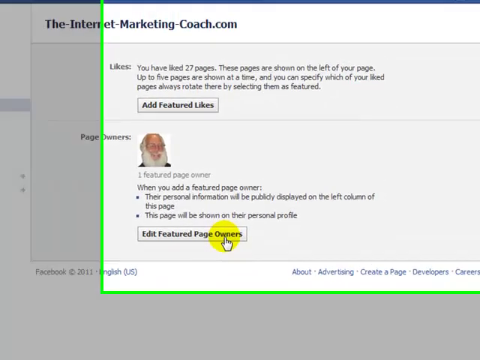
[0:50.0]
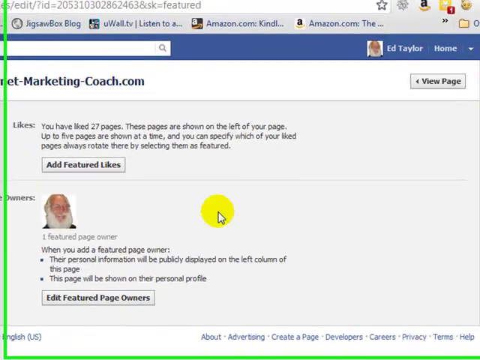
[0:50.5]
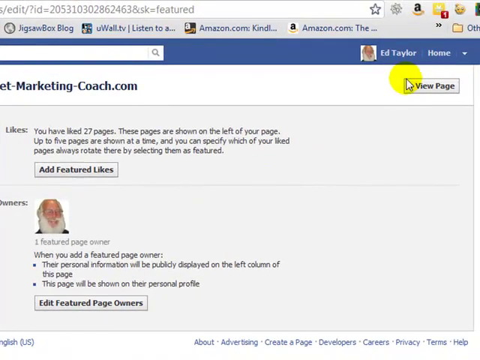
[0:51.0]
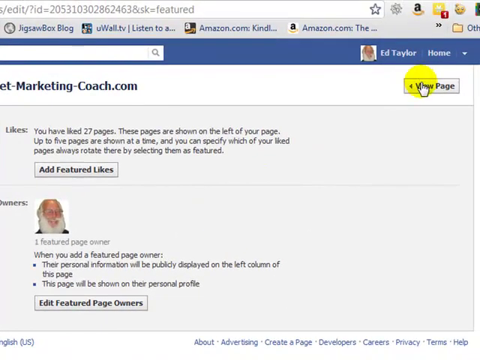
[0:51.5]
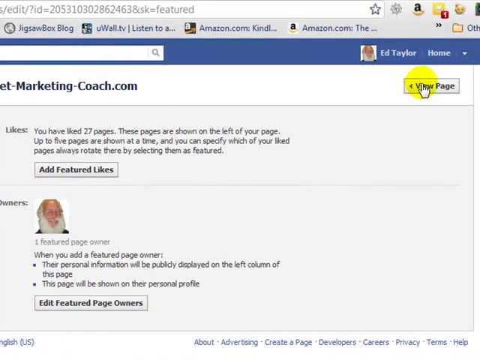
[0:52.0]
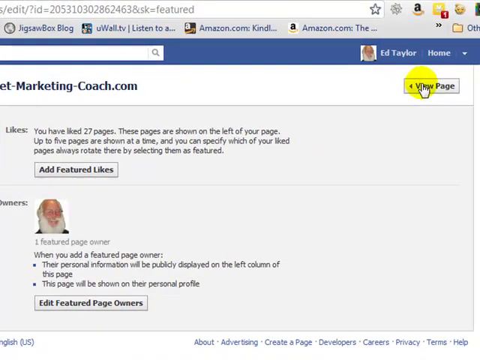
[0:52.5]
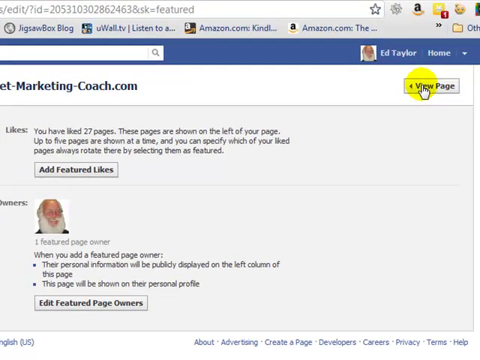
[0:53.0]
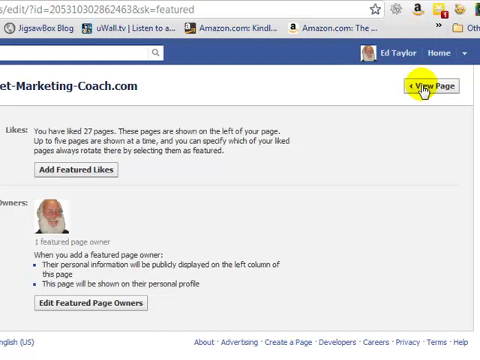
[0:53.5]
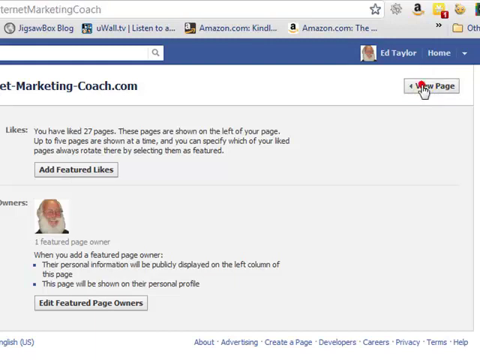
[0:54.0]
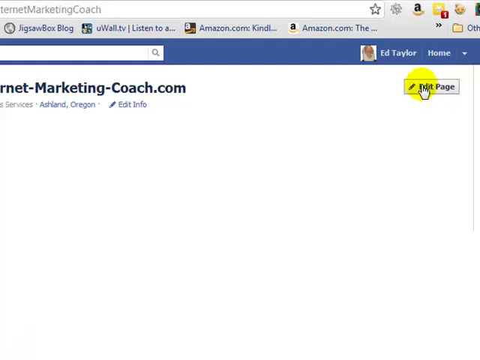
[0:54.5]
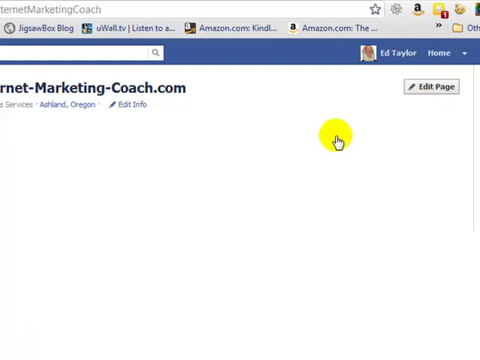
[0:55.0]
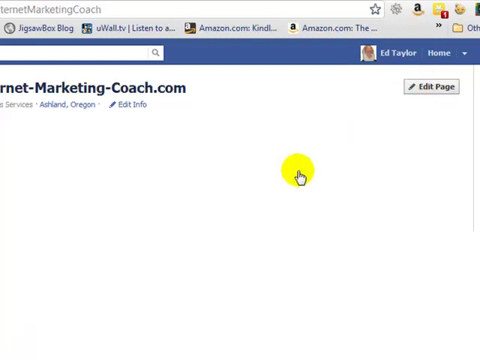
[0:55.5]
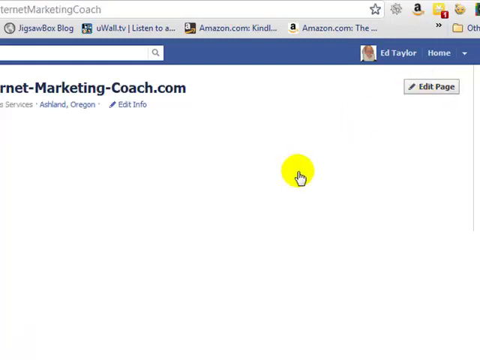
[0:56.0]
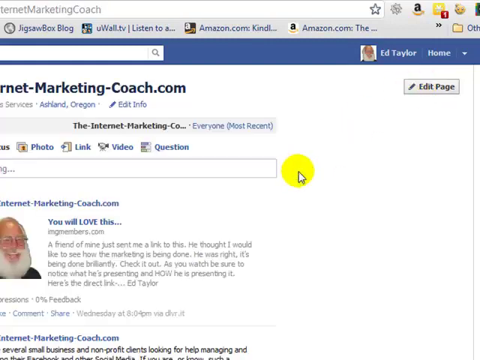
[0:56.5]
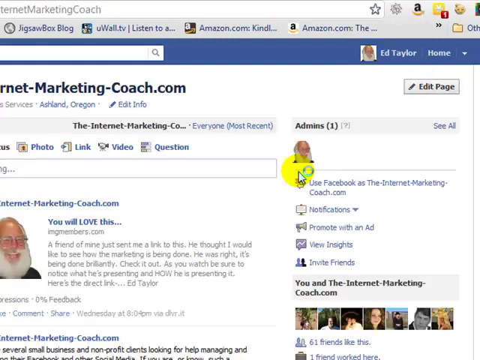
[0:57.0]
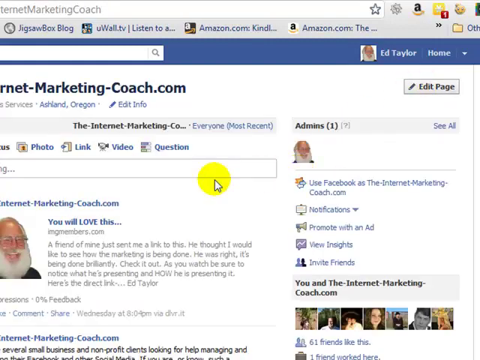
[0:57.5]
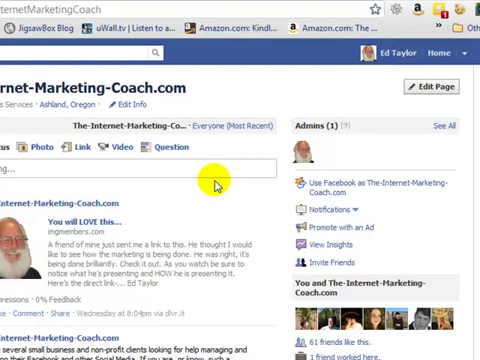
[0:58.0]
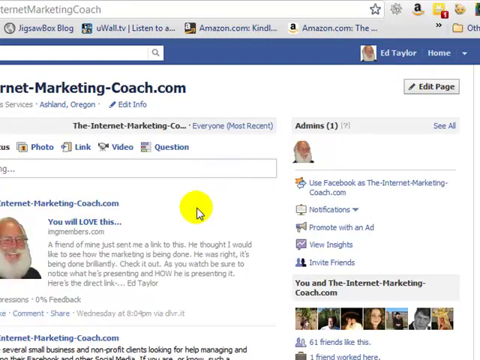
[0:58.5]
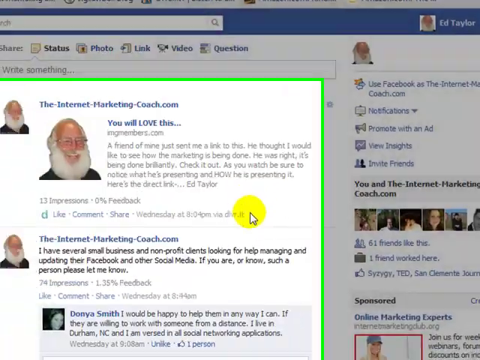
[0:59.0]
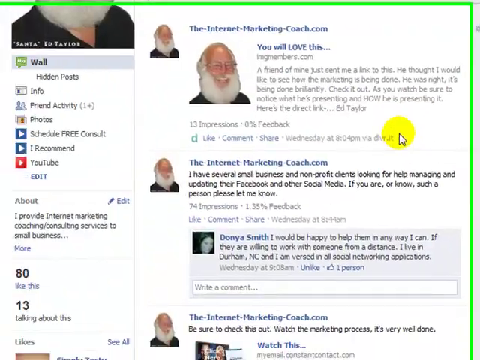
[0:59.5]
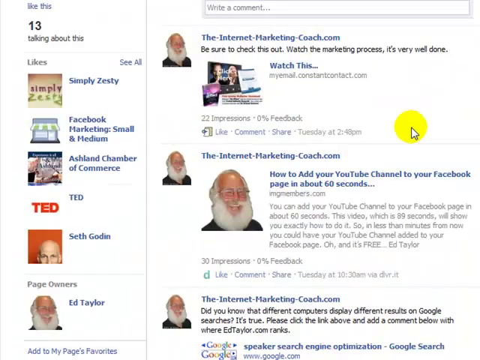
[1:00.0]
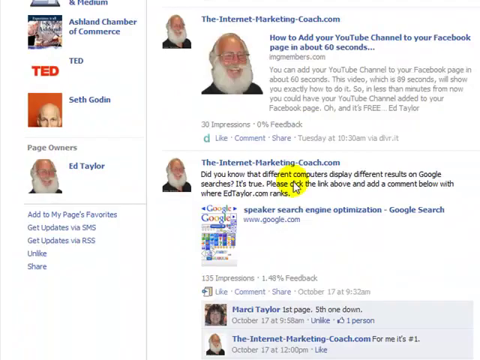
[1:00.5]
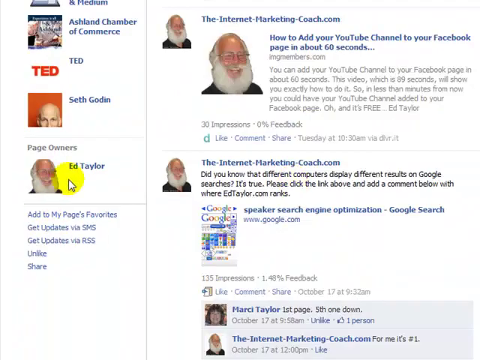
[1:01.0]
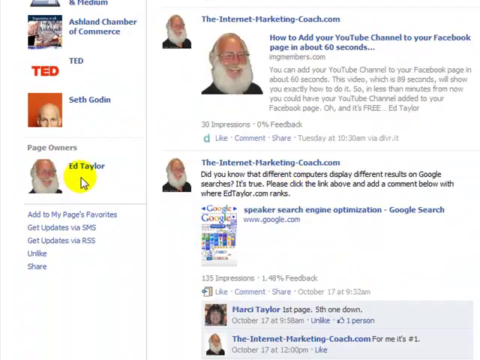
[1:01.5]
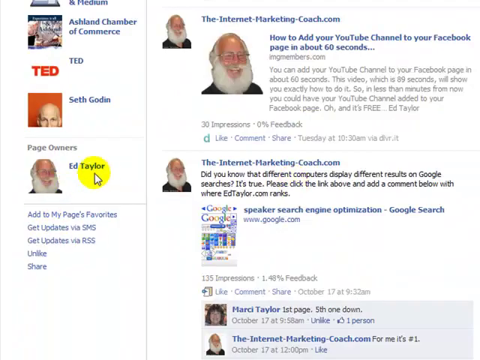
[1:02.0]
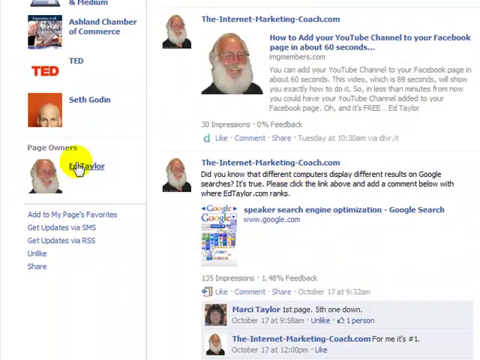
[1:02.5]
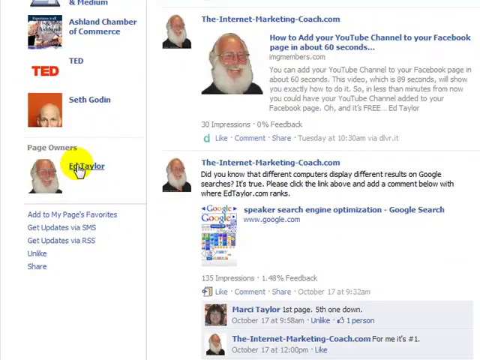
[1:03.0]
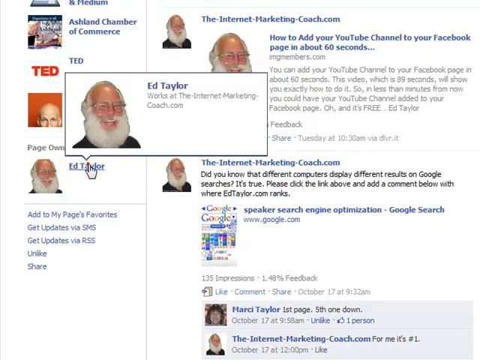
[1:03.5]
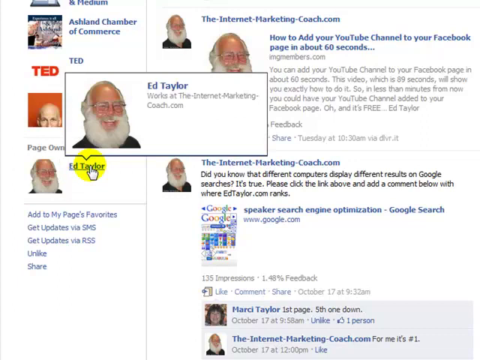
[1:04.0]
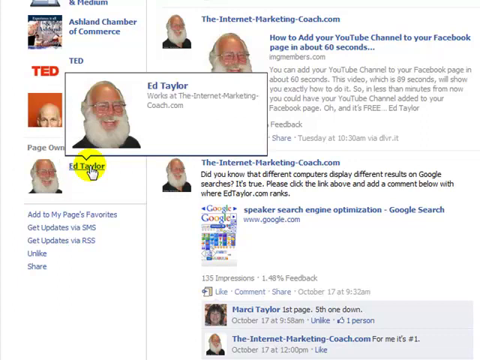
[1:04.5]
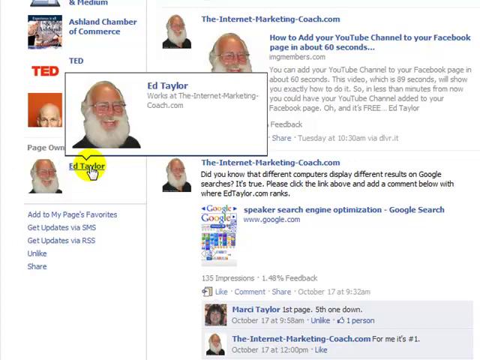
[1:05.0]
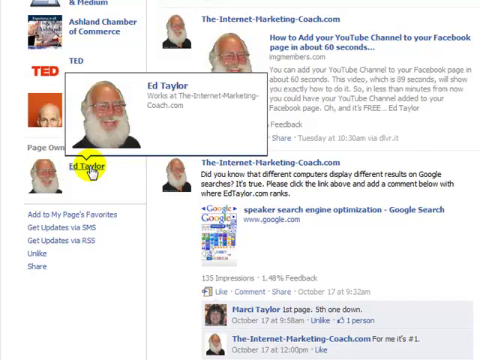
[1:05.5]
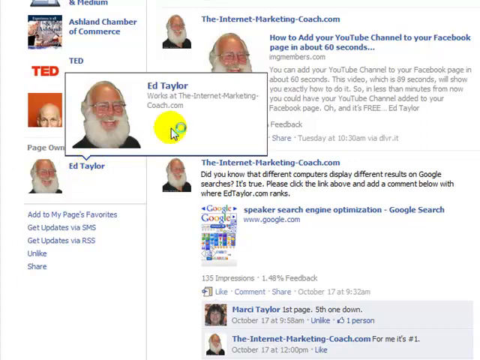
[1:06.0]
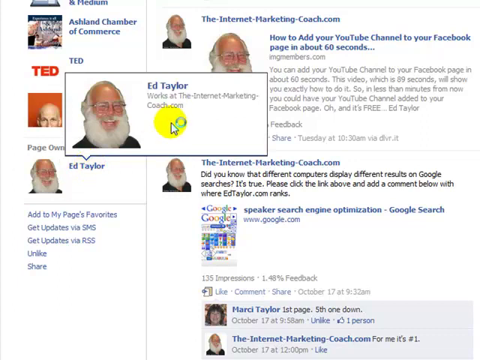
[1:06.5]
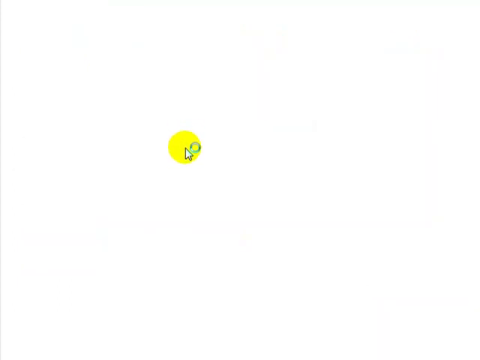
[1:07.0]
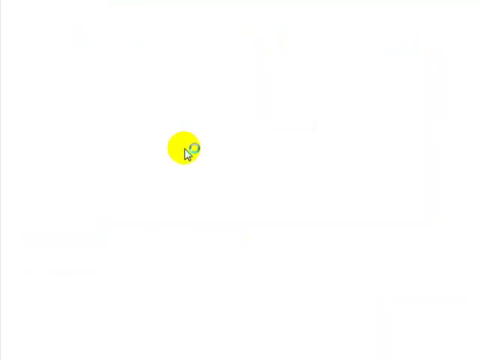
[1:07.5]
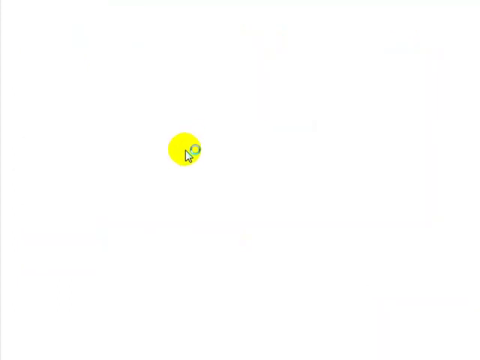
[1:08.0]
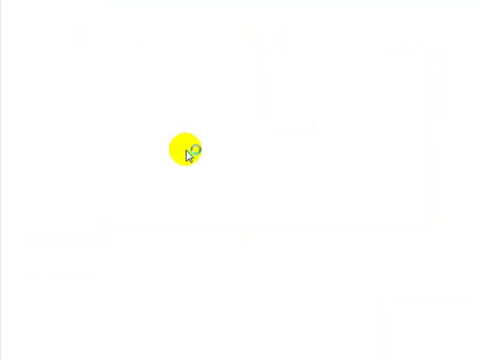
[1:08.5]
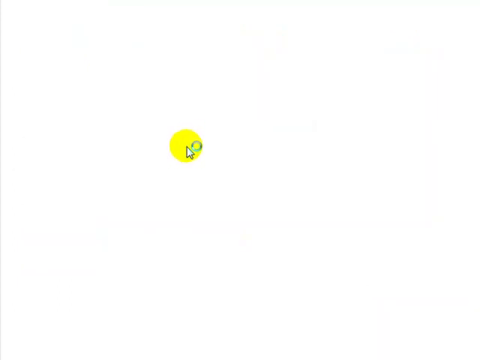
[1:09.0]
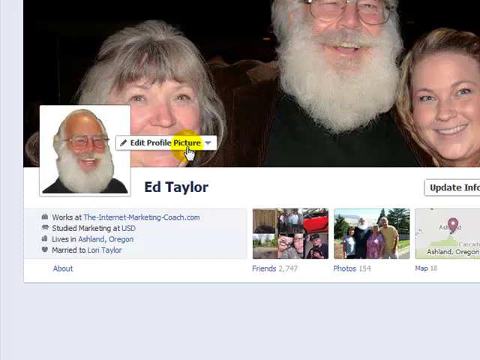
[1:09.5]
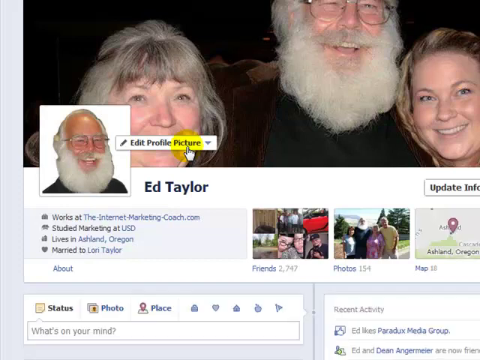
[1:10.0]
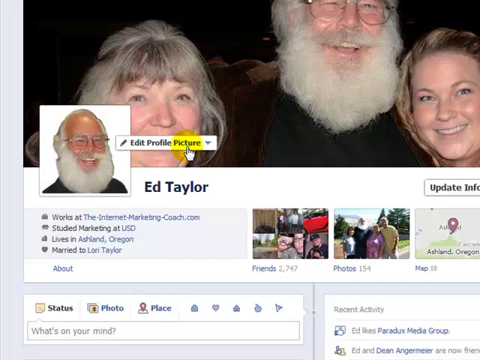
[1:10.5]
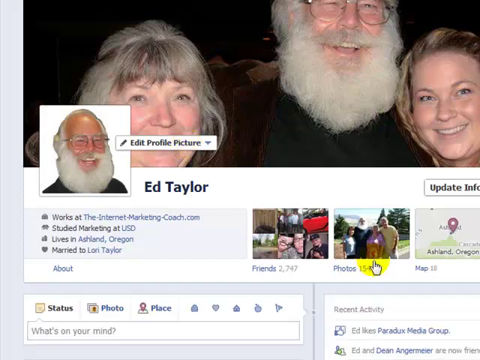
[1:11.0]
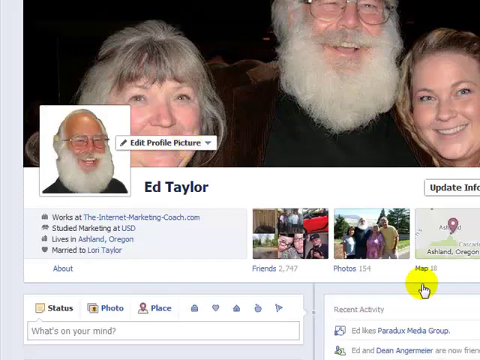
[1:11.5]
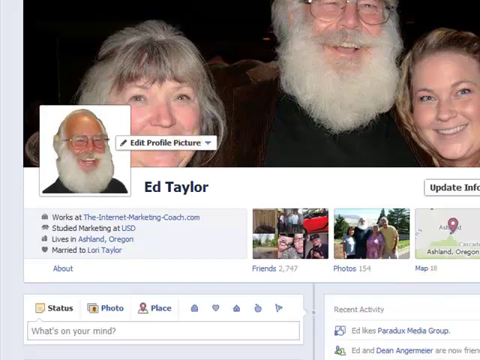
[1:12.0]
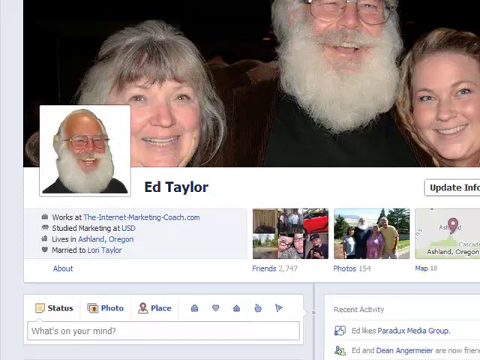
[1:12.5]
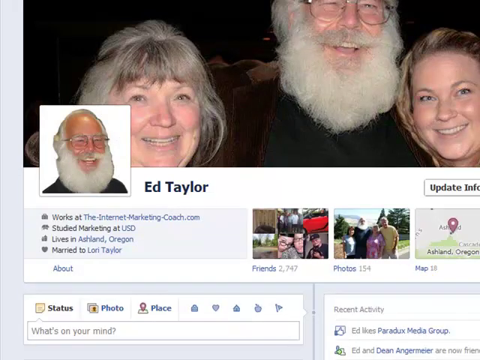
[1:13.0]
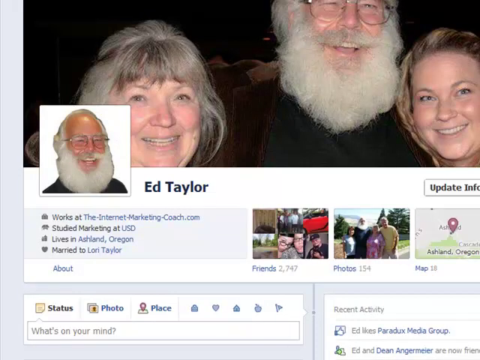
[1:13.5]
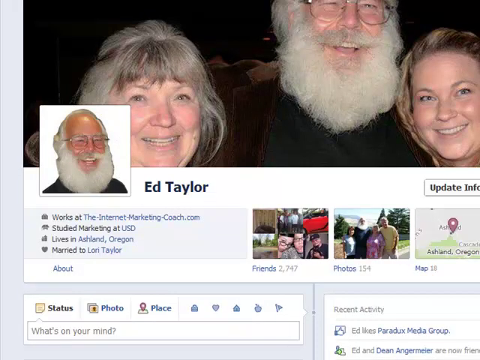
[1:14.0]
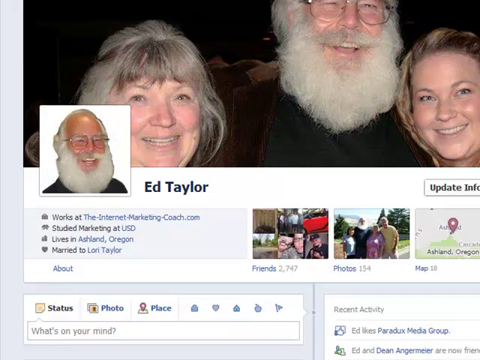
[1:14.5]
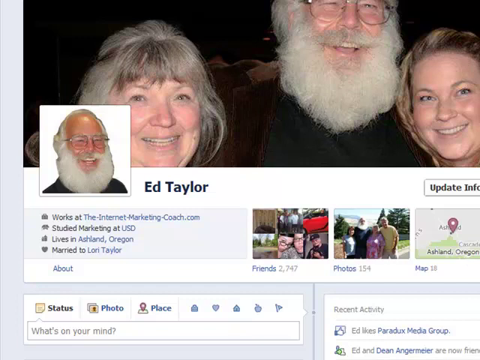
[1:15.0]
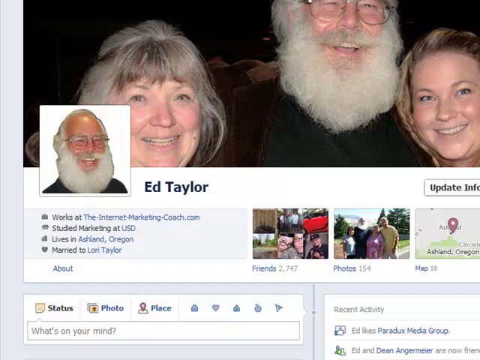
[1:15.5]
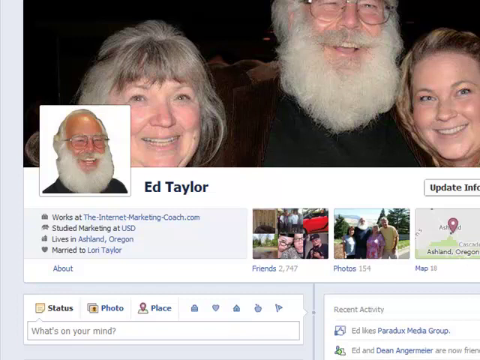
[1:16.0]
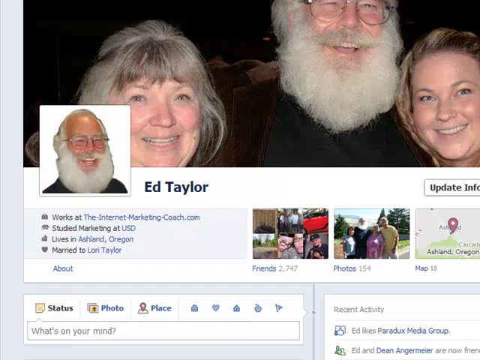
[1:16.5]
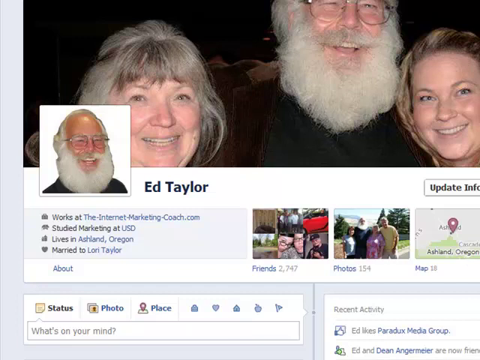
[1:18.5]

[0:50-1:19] The Facebook page shows "Edit Featured Page Owners." The cursor moves up to "View Page" and clicks it, which brings up a blank screen, still on the Facebook website. It says "internetmarketingcoach.com," along with "Ashland, Oregon" and "Edit Information." At the top is a browser search bar with a favorites star, plus an Amazon logo, an "Others" folder, several Amazon links for amazon.com, Kindle, and amazon.com, and a link for Jigsaw Box Blog. The Facebook page pops back up, and the cursor scrolls over to show the page owner's name, Ed Taylor. Clicking it brings up a smaller box showing the person who owns the page, and then his actual profile is shown. There is a profile picture of the man, and also a shot of the man with an older woman and a younger girl.